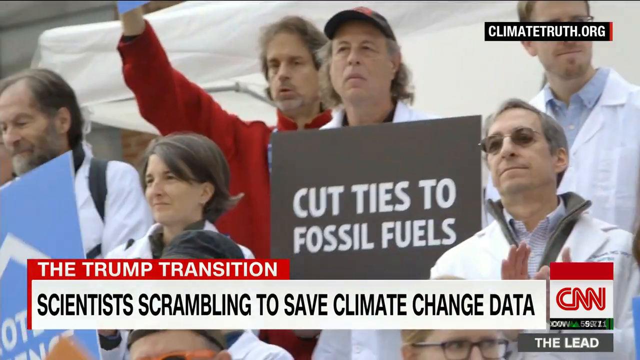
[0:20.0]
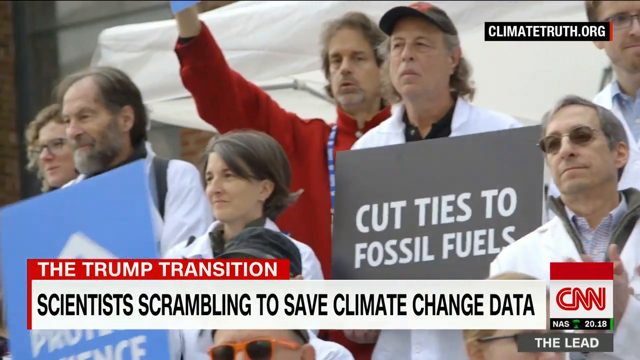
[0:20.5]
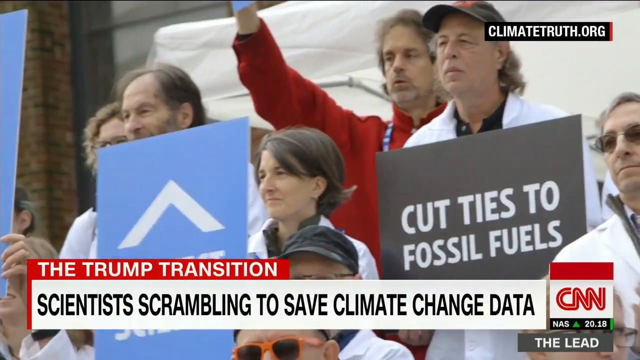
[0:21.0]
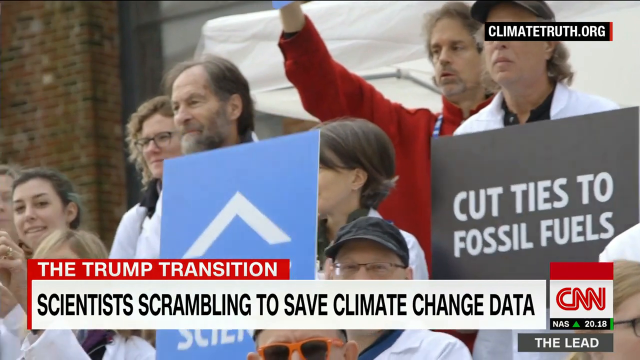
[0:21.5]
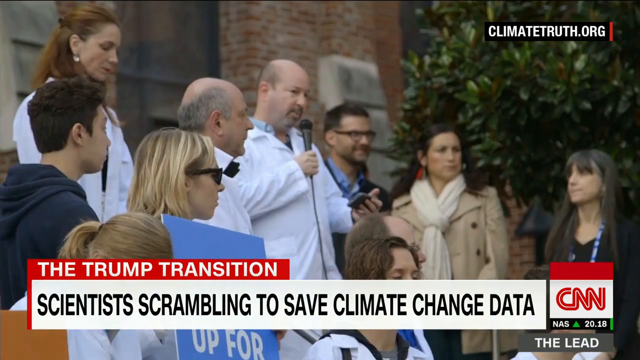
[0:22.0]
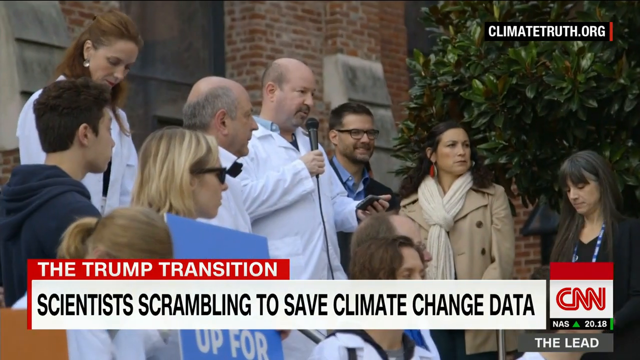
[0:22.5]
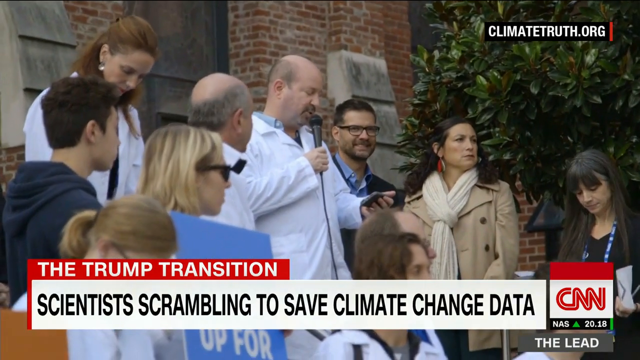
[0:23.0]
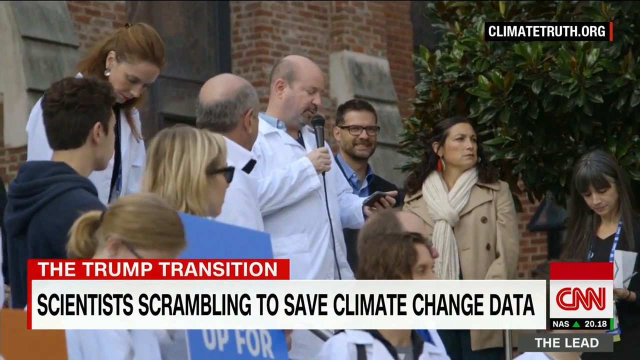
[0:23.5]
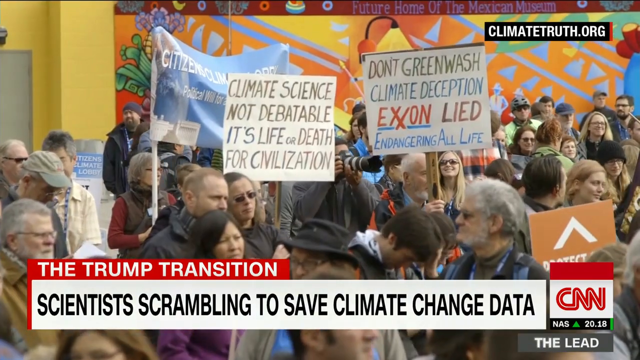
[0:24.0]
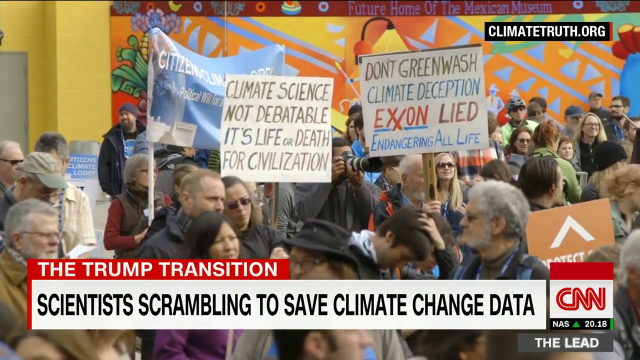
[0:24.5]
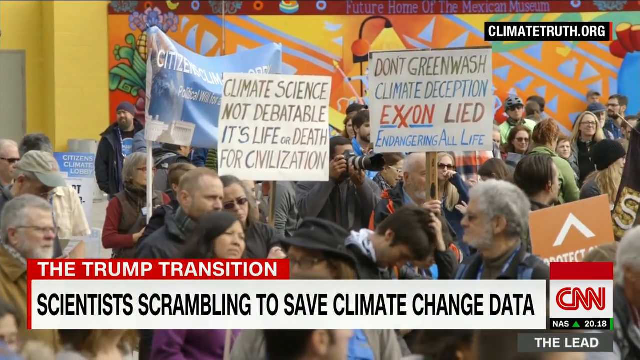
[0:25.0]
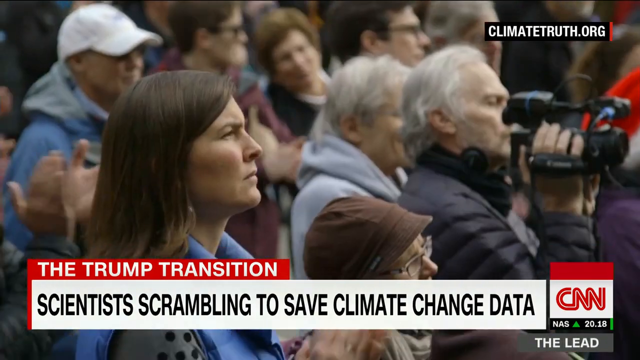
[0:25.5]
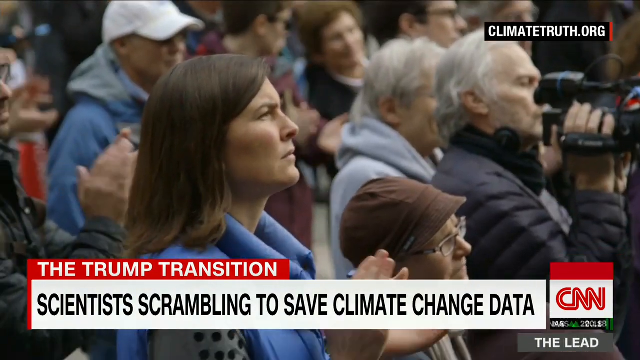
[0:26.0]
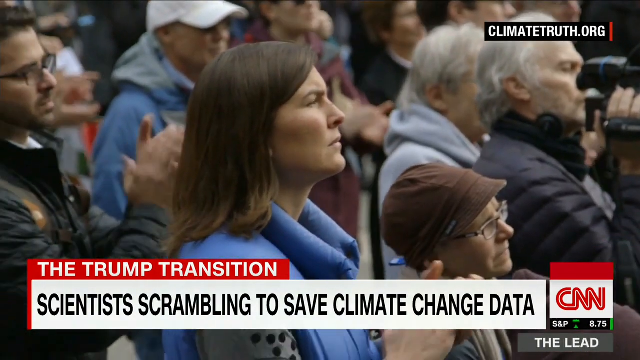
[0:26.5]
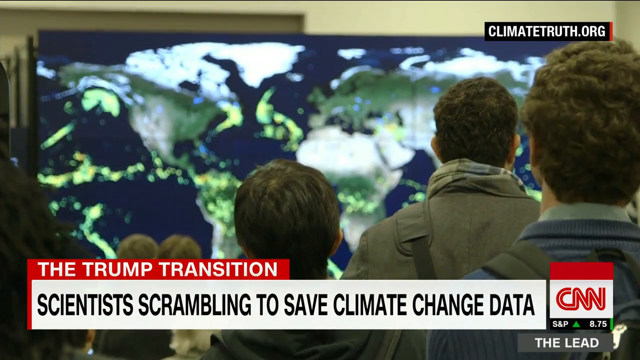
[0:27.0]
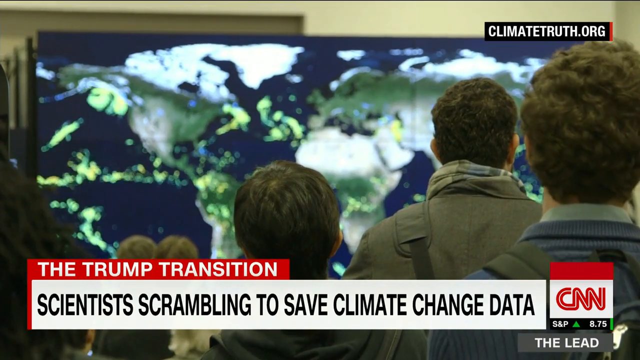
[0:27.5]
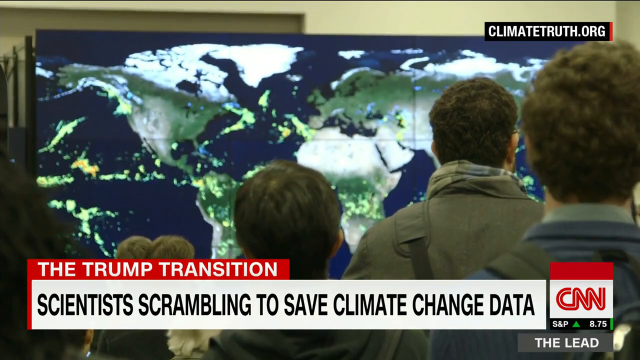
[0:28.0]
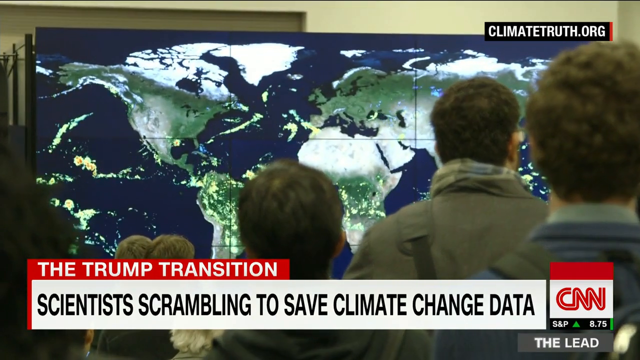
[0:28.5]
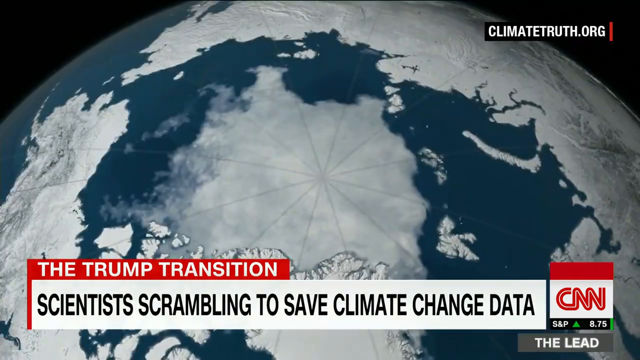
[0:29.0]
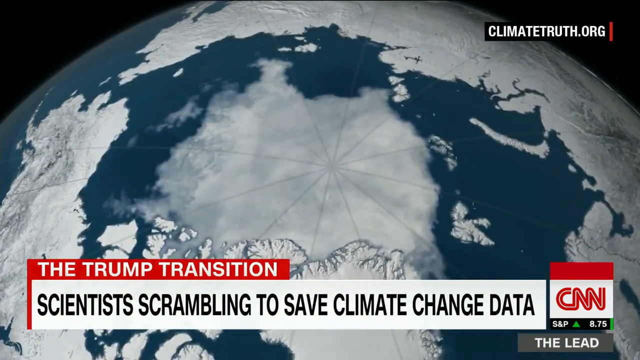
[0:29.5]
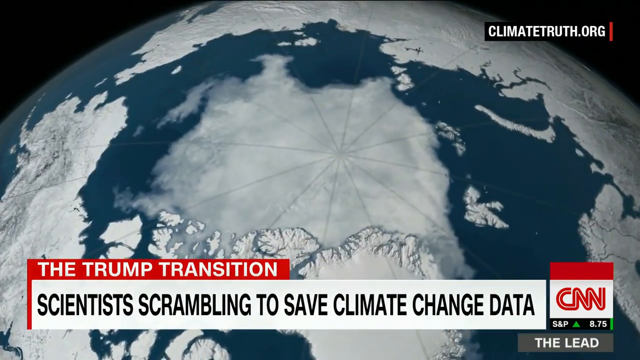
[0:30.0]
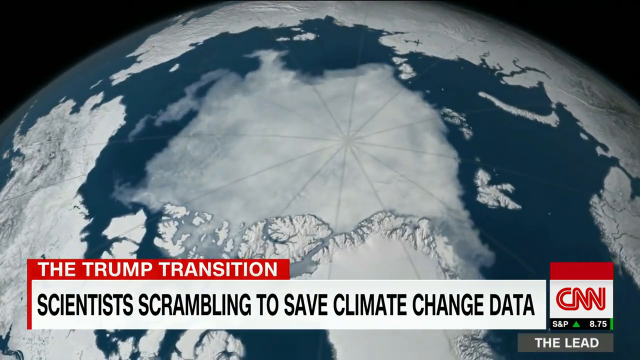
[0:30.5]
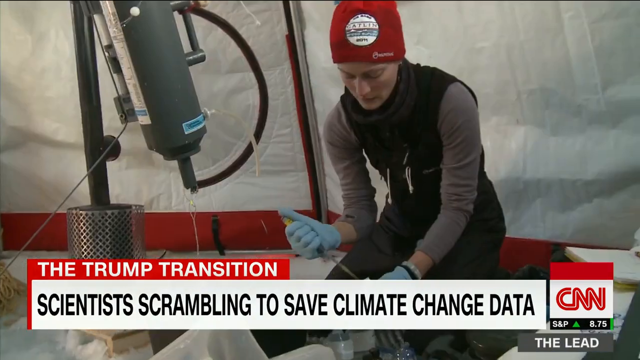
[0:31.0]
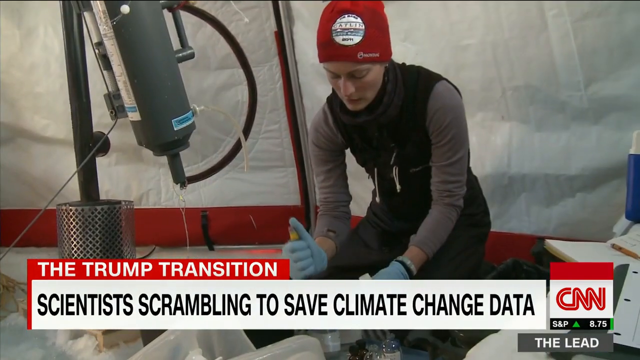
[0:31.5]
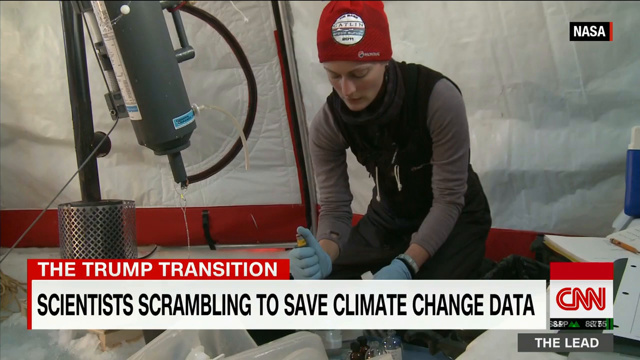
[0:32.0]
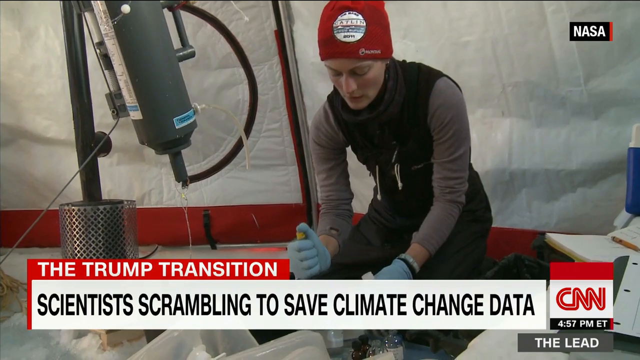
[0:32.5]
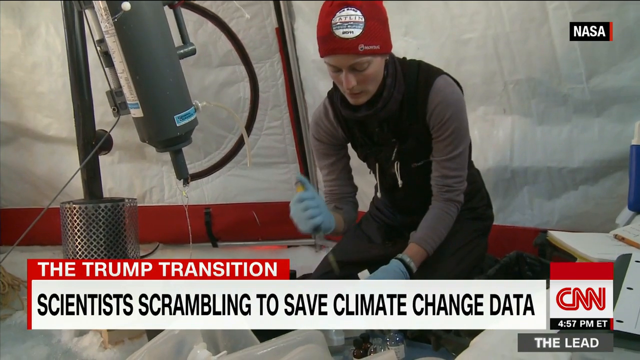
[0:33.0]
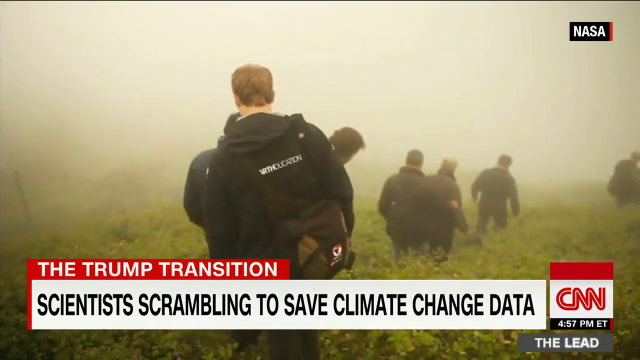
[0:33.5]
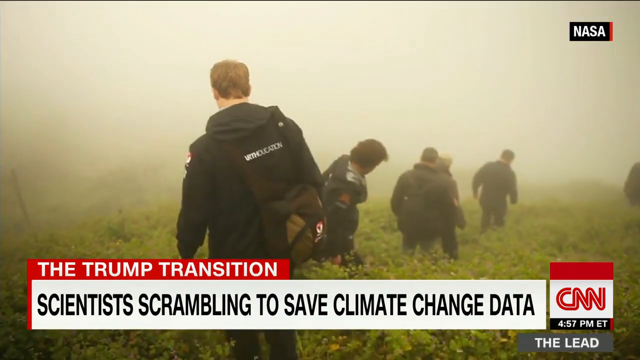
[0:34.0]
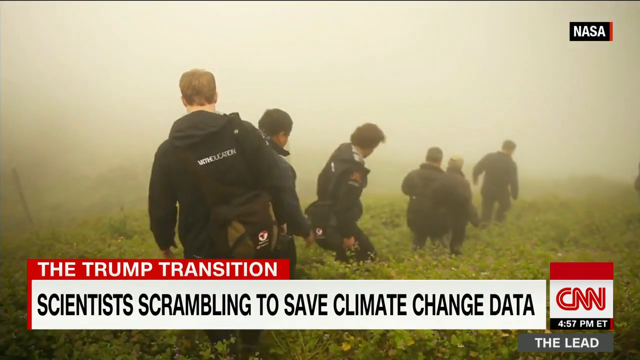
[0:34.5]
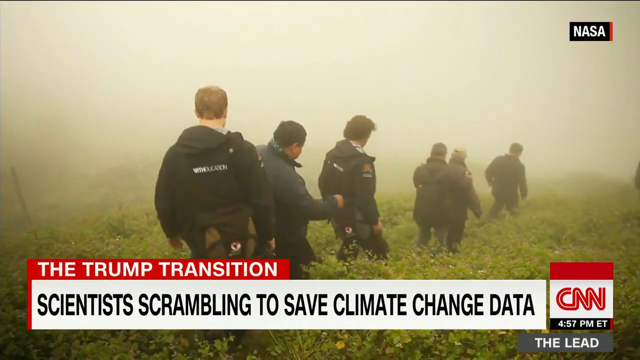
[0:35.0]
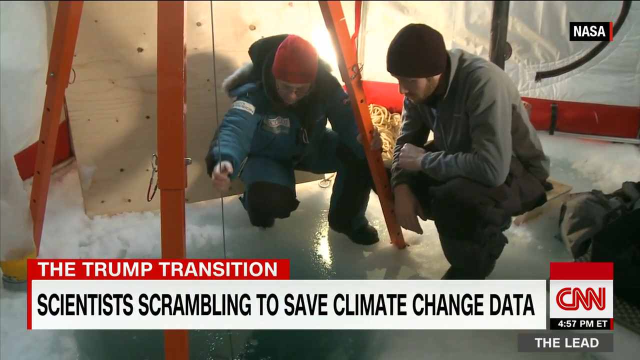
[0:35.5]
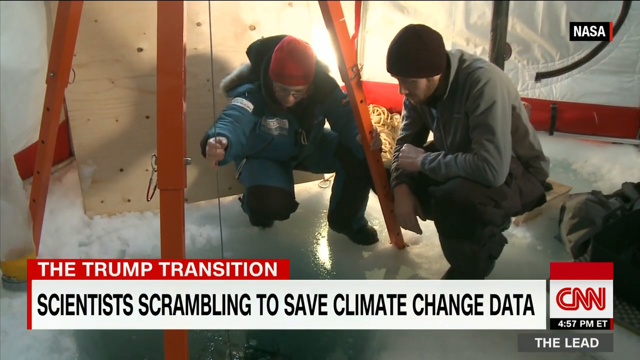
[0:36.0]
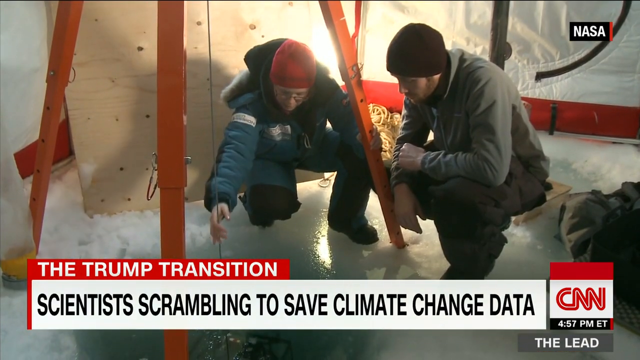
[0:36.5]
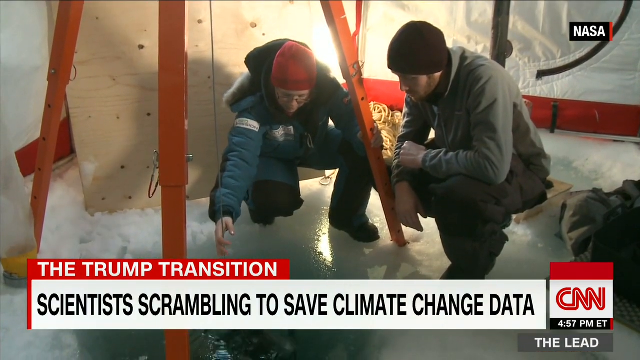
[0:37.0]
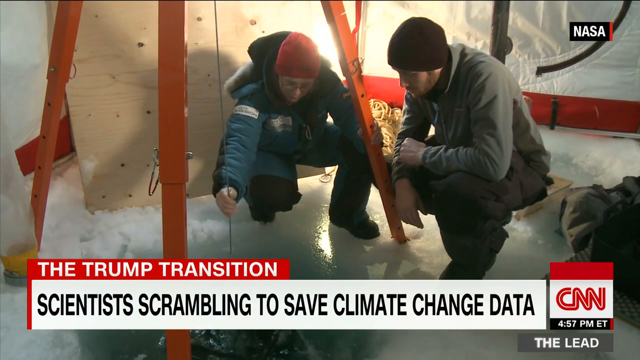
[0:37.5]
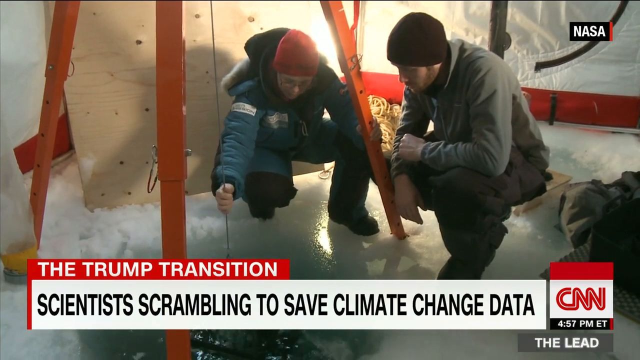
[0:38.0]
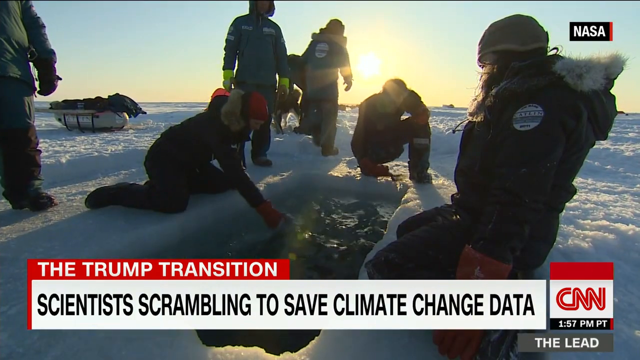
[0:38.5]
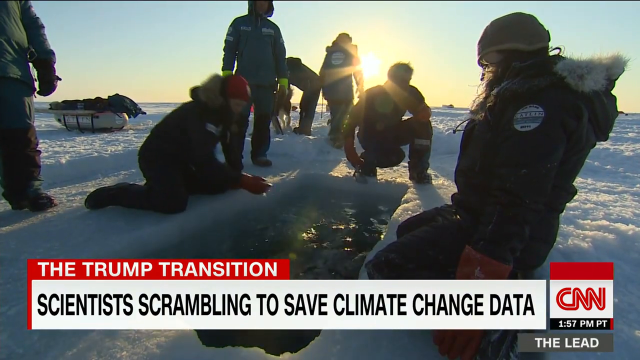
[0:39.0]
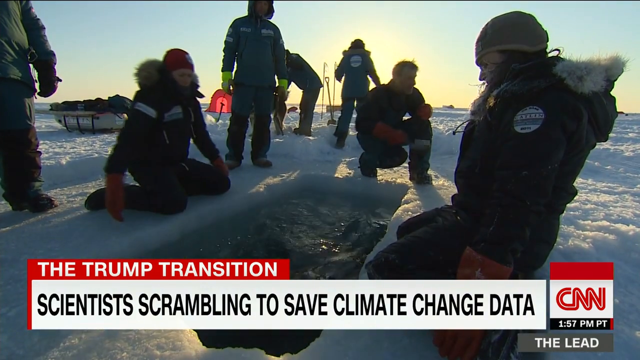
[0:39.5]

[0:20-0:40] Scientists, mostly in white coats, hold up a sign. Different clips show them addressing the crowd, the crowd holding various protest signs, and people cheering. Media reporters have cameras. People then look at a large screen showing the earth, like satellite images, followed by a full screen of the earth and a satellite image of the earth. The video cuts to a woman bundled up in a beanie and gloves who looks like she is in a tent; some type of tools or equipment are there, and she holds something in her hand and injects something. Next is what looks like a field with tall grass and greens, but it is completely hazy and visibility is low. A group of people in black jackets and backpacks walk through the field. Two other scenes follow in which two people inside a tent inspect something that looks like a wire cut through into the ice; they are under a three-pronged metal device, with a spotlight behind them. The footage is from NASA. Then some scientists are in a land of all ice, where they have cut a rectangle out of the ice.